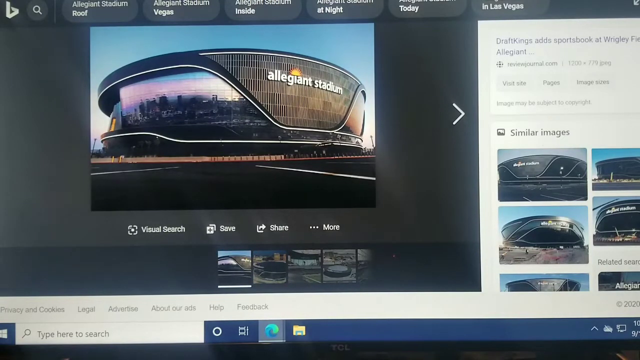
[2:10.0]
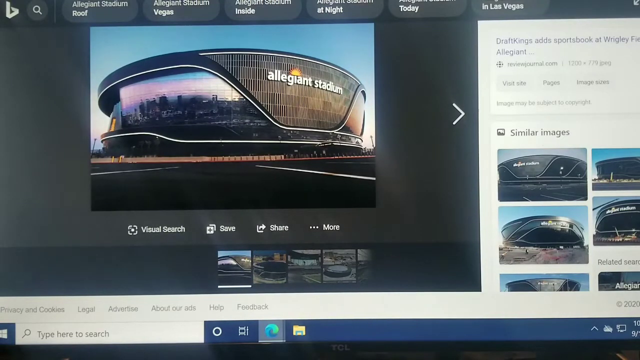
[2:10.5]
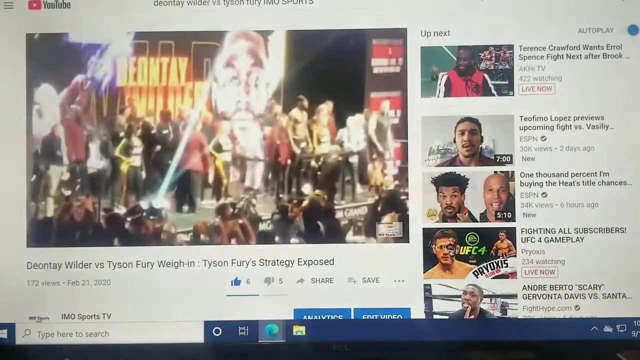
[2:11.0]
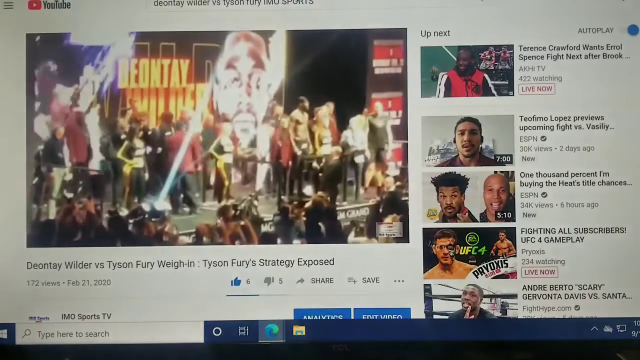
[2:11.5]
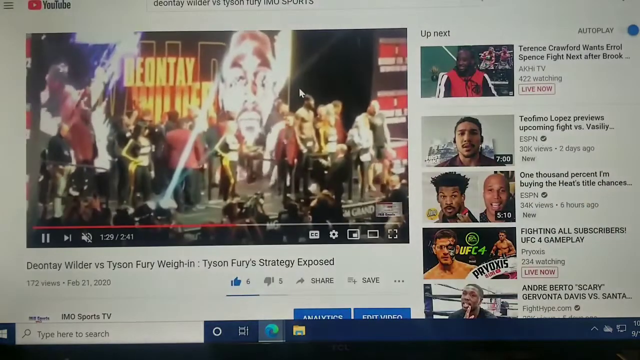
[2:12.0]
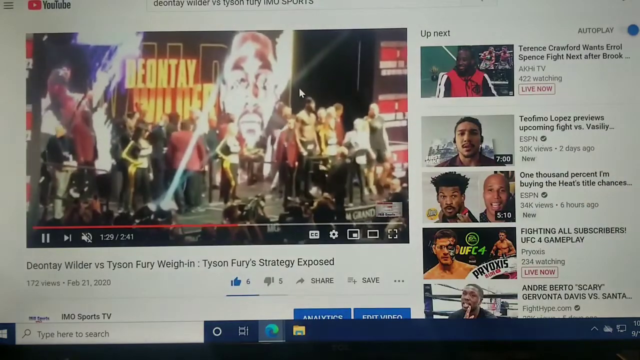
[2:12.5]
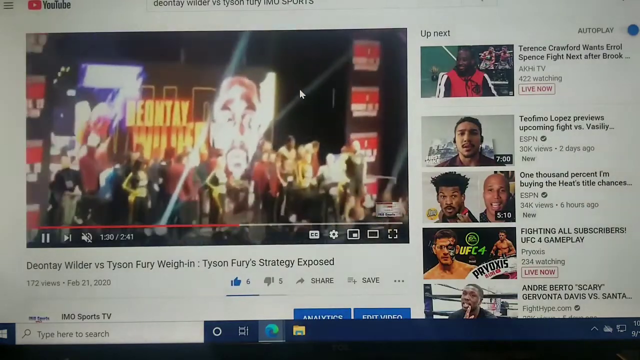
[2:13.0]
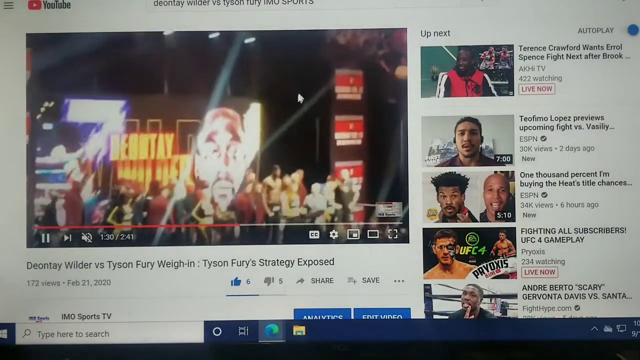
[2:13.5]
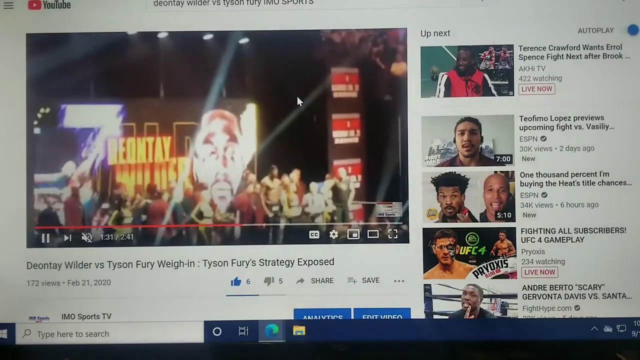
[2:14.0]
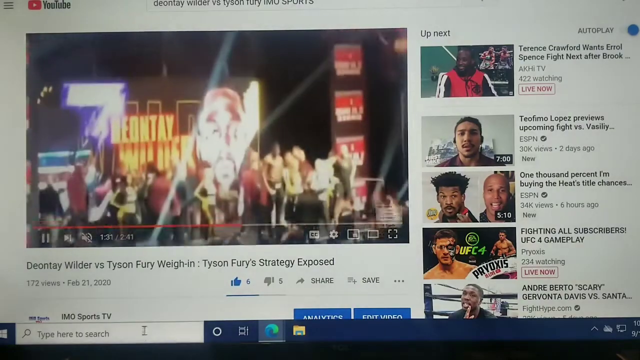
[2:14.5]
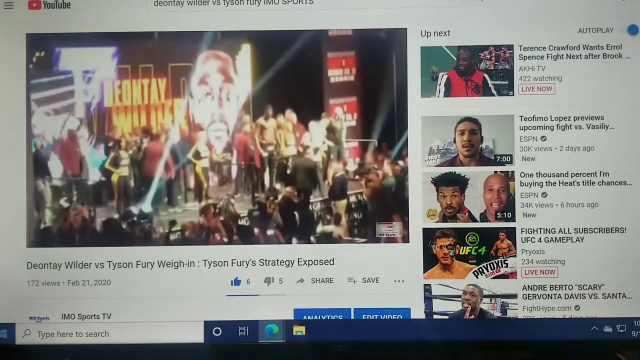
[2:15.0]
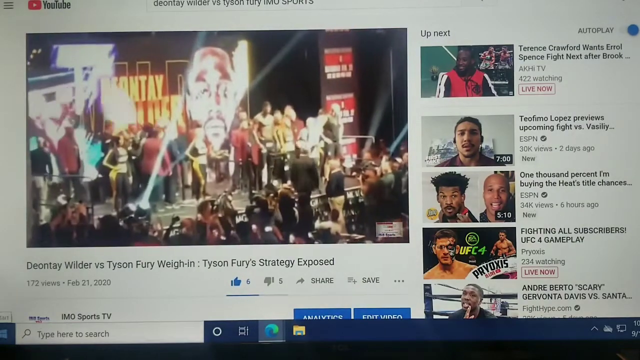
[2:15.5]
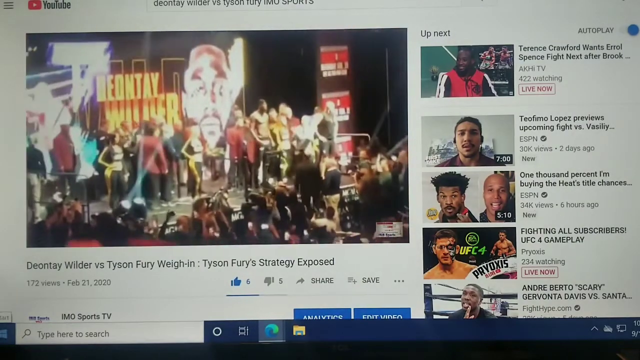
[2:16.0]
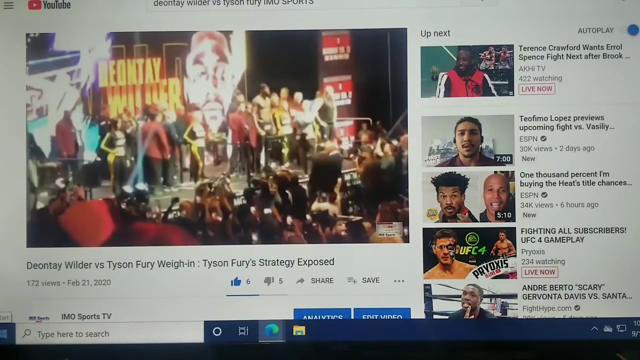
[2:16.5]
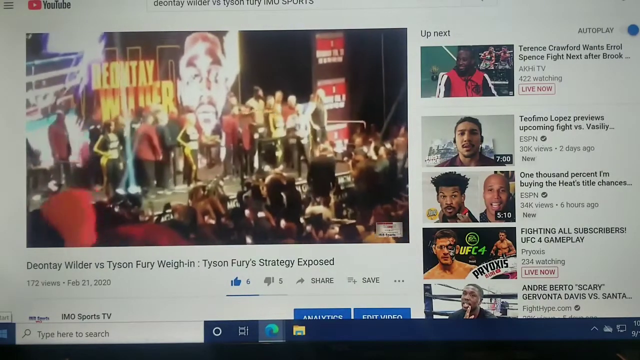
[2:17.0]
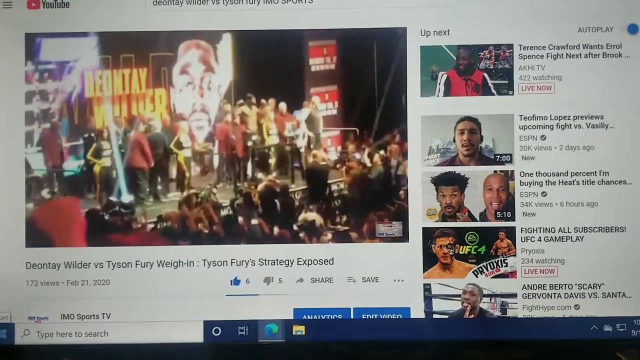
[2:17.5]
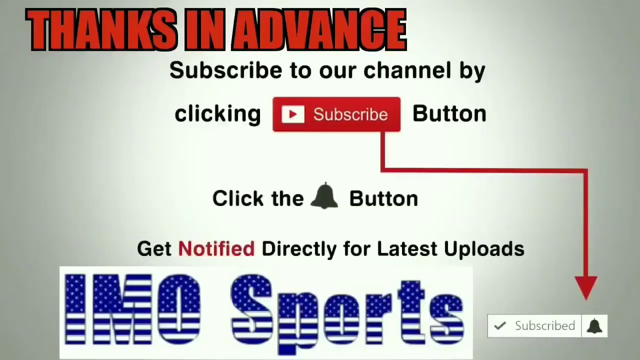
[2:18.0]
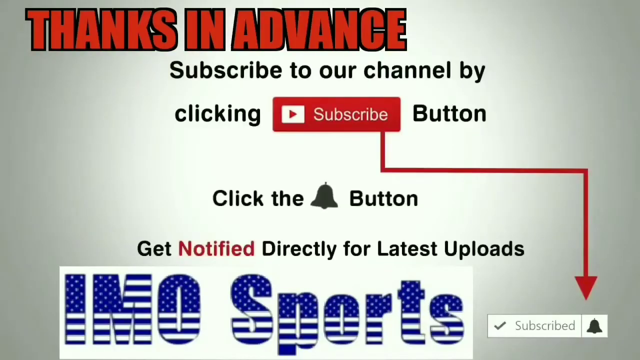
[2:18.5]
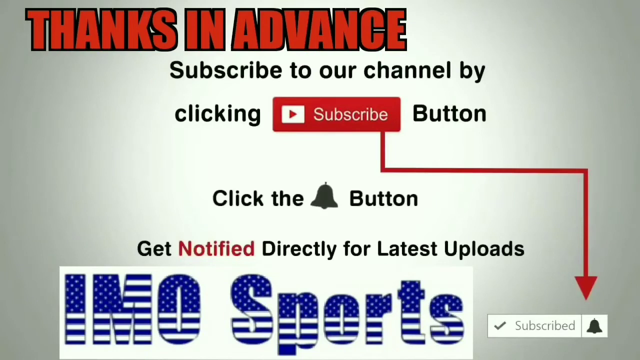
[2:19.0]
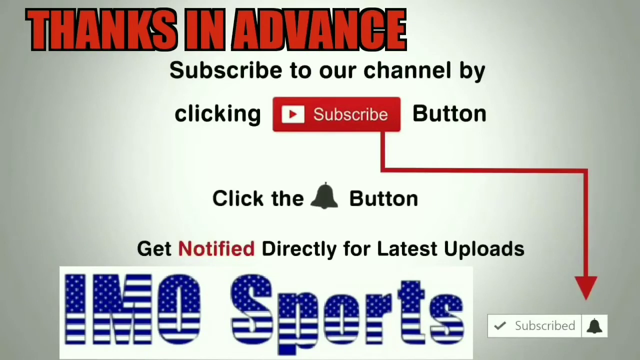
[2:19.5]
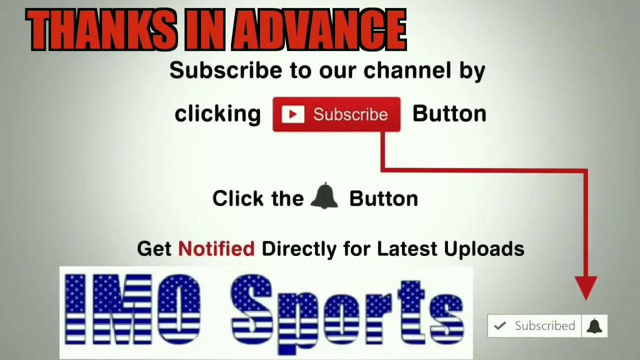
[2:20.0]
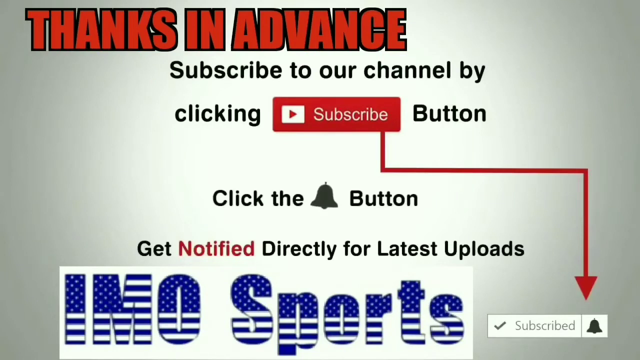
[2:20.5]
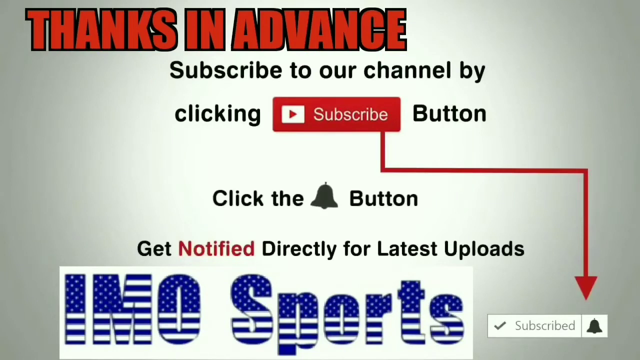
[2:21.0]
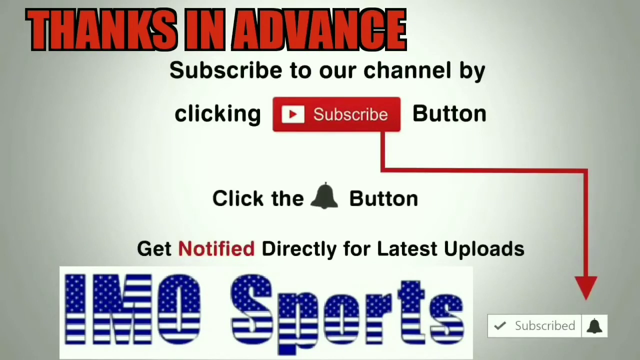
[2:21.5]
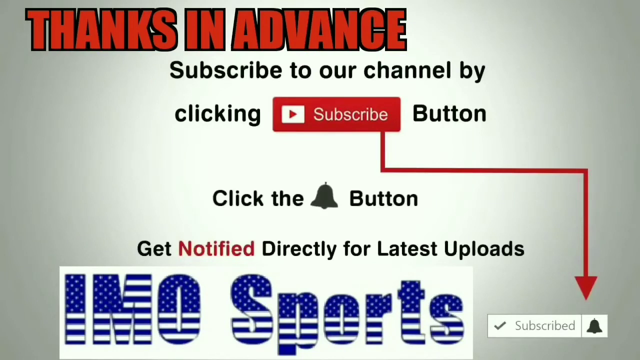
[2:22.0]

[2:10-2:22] Someone is recording their computer screen with a YouTube video playing that says "Deontay Wilder vs Tyson Fury weigh in." The video is kind of blurry. The portion playing shows Deontay Wilder on stage; behind him is a huge, life-size screen showing his face and his name. He is on the stage showing off.